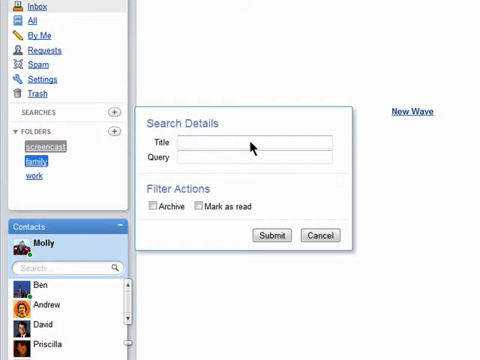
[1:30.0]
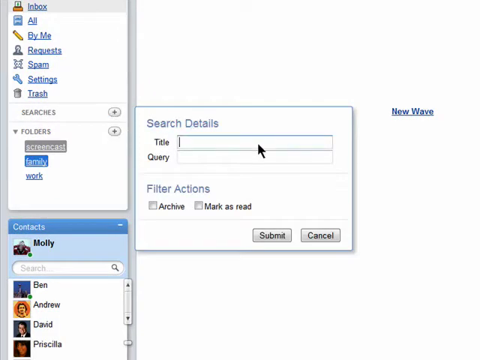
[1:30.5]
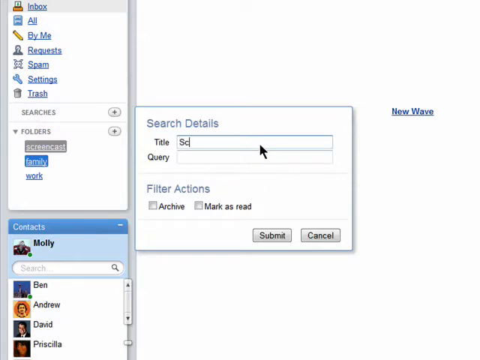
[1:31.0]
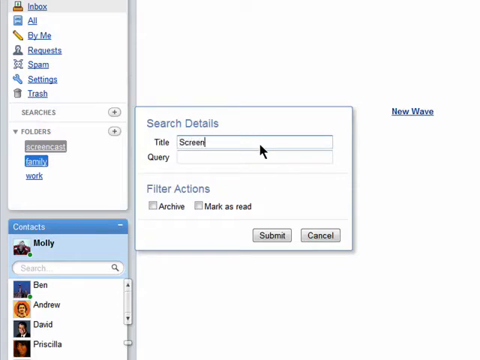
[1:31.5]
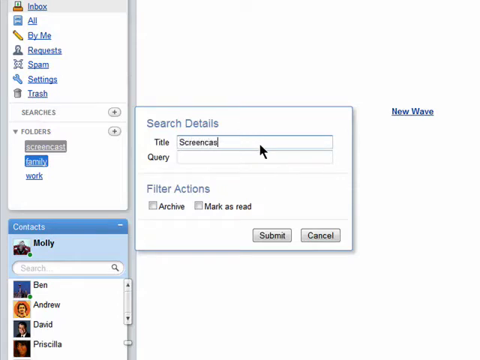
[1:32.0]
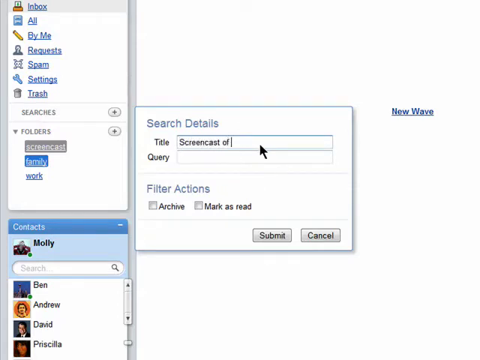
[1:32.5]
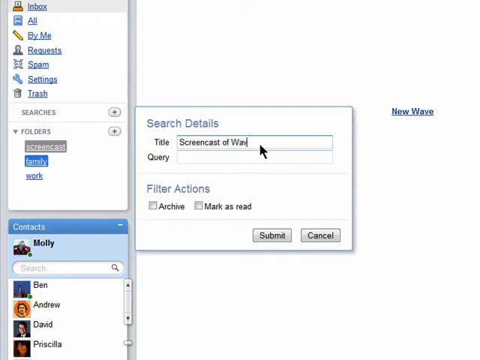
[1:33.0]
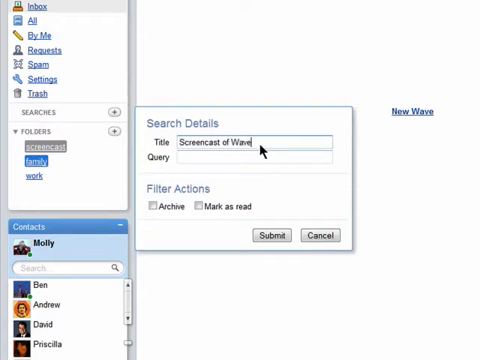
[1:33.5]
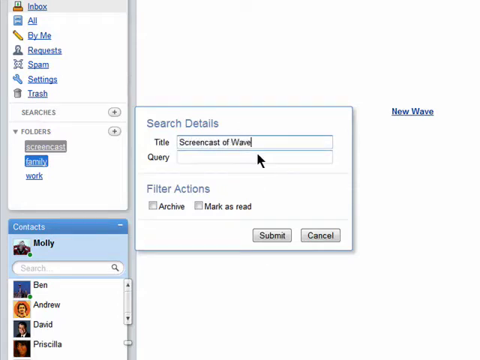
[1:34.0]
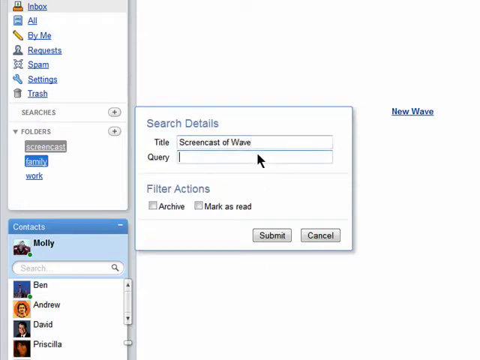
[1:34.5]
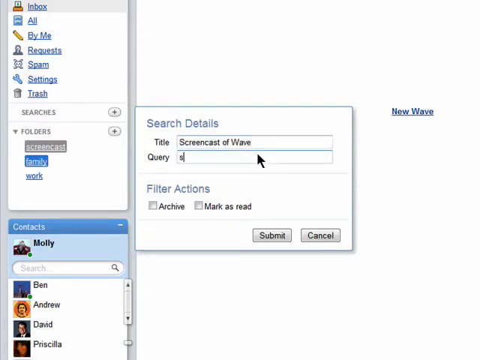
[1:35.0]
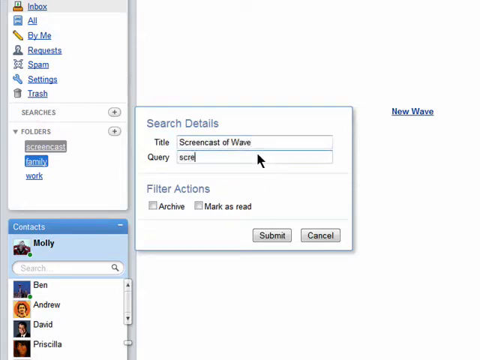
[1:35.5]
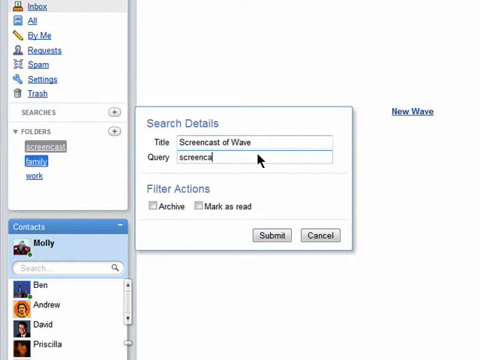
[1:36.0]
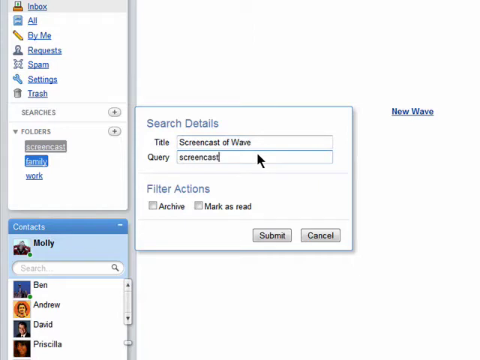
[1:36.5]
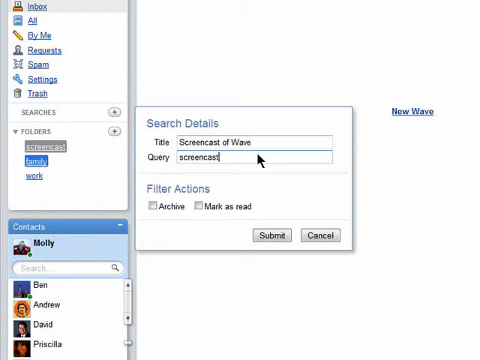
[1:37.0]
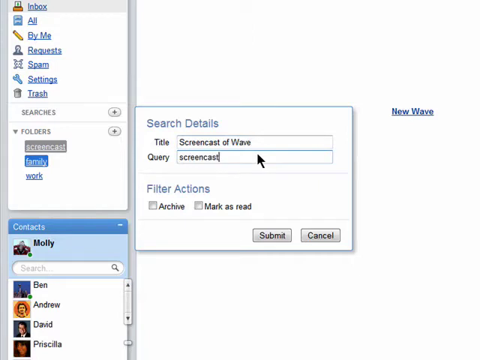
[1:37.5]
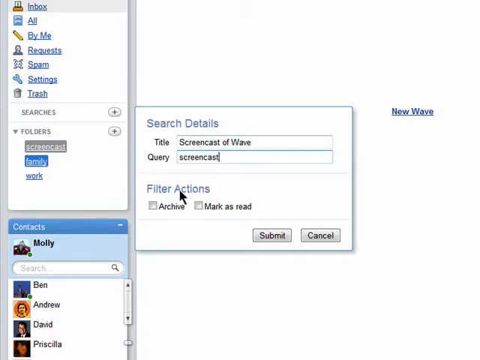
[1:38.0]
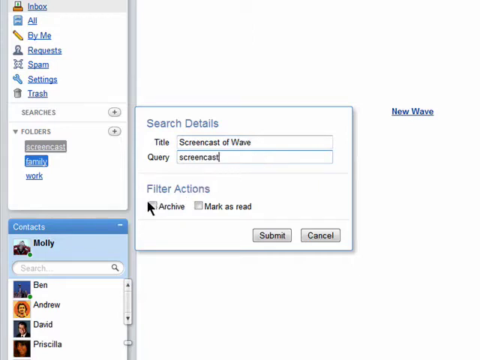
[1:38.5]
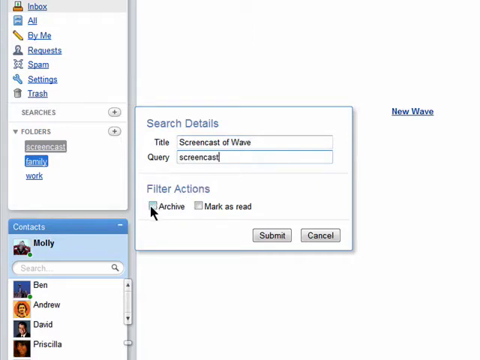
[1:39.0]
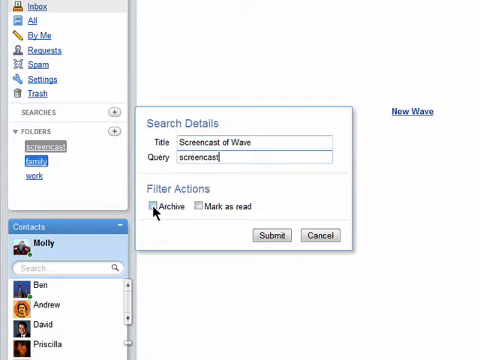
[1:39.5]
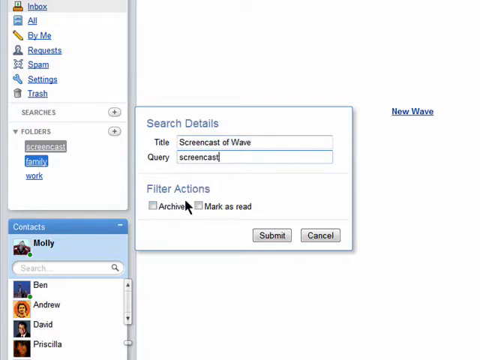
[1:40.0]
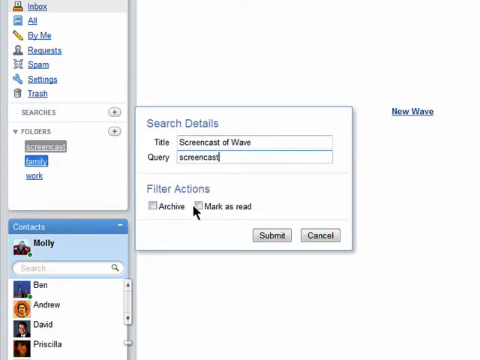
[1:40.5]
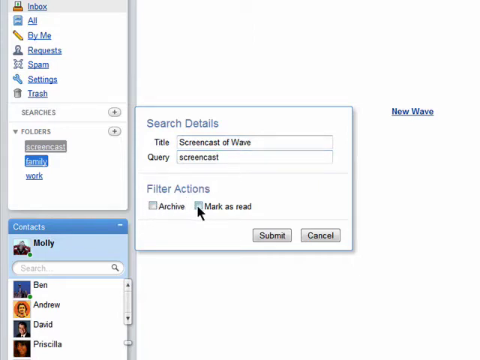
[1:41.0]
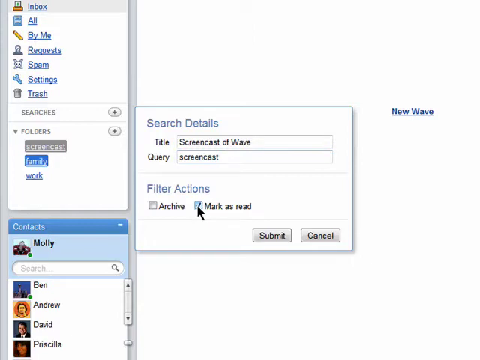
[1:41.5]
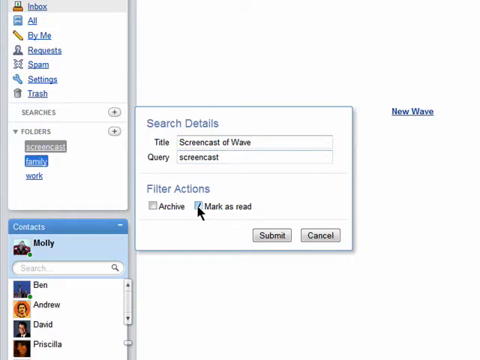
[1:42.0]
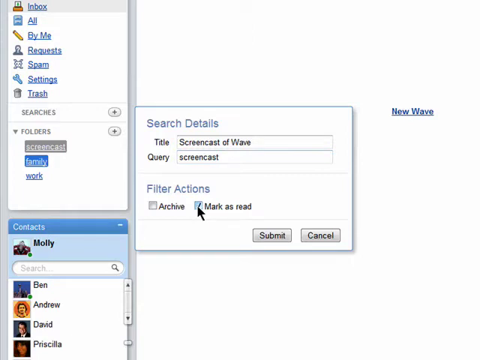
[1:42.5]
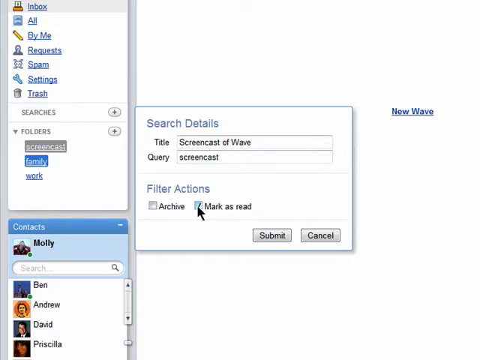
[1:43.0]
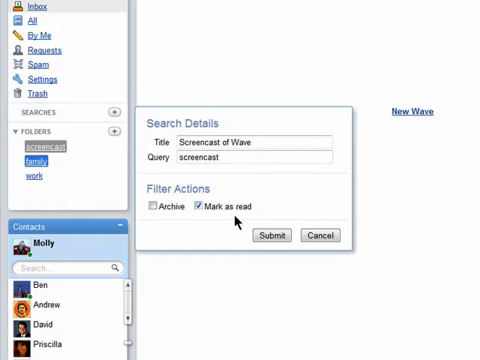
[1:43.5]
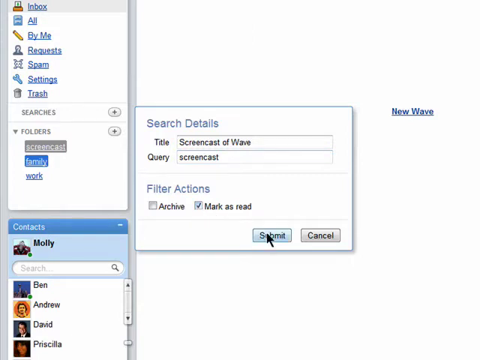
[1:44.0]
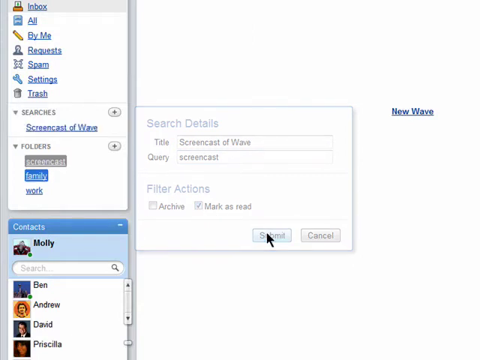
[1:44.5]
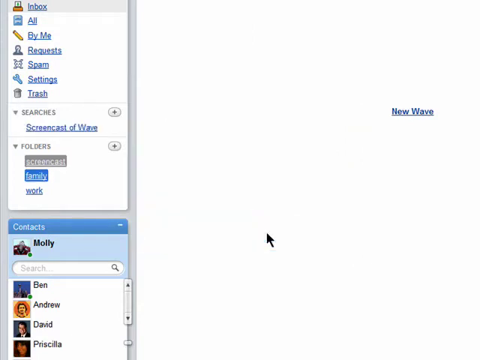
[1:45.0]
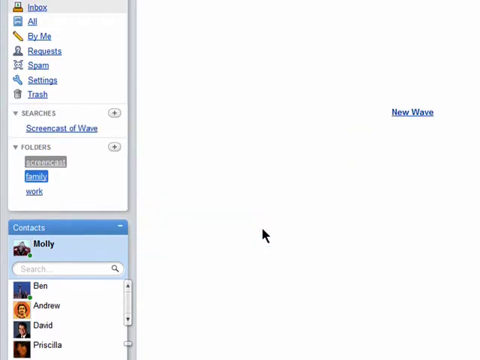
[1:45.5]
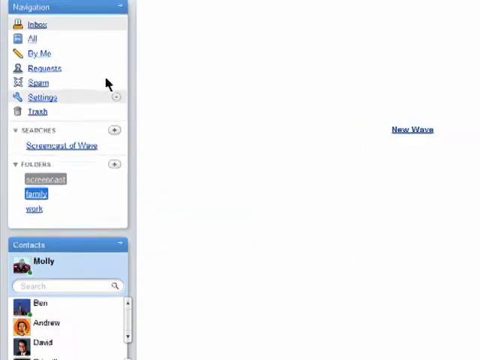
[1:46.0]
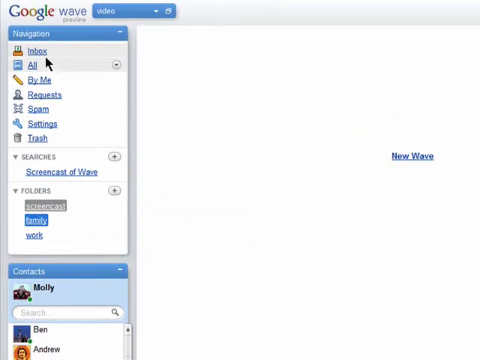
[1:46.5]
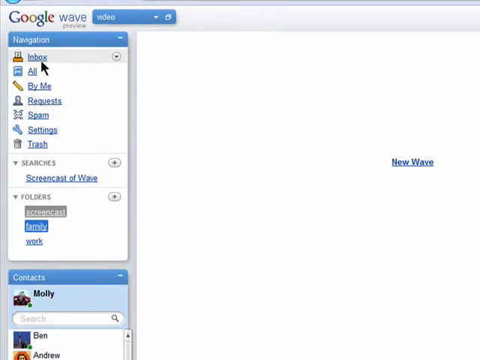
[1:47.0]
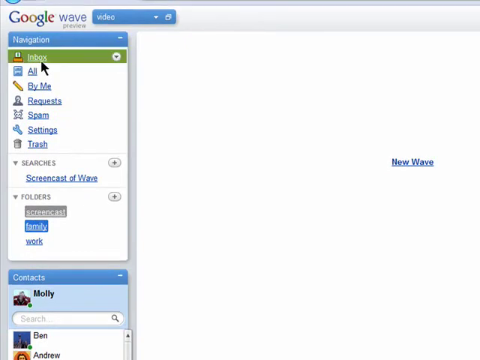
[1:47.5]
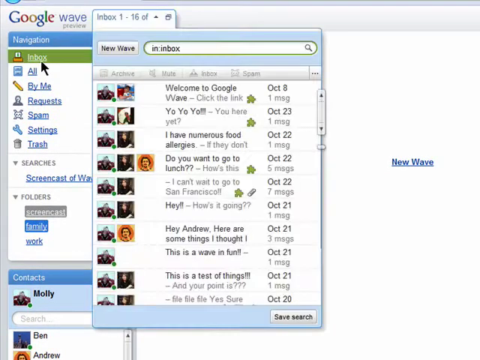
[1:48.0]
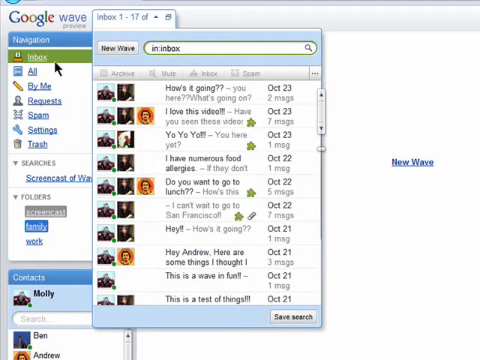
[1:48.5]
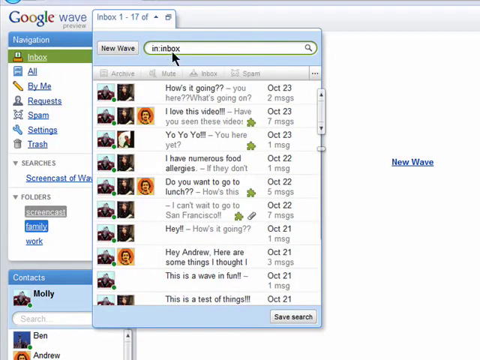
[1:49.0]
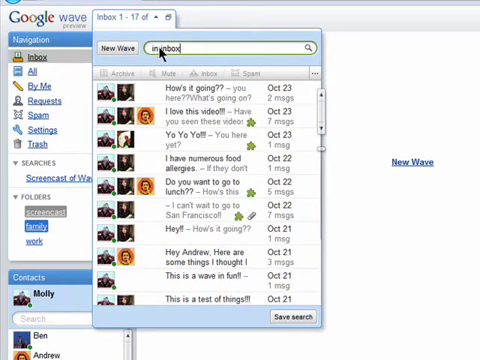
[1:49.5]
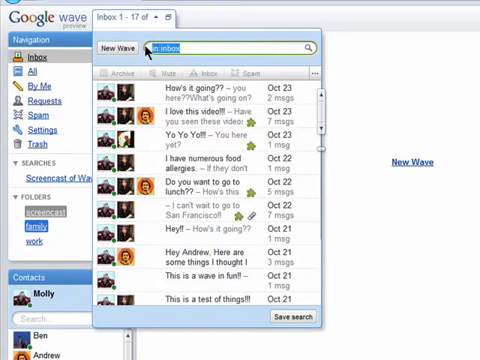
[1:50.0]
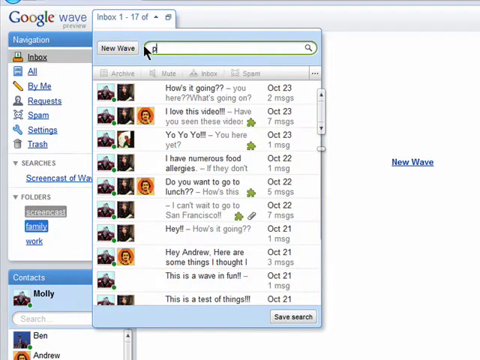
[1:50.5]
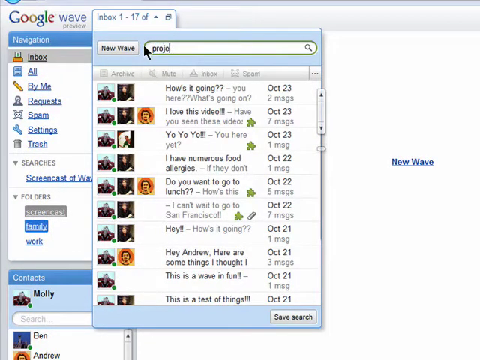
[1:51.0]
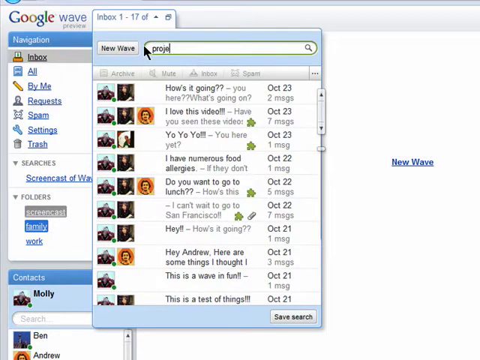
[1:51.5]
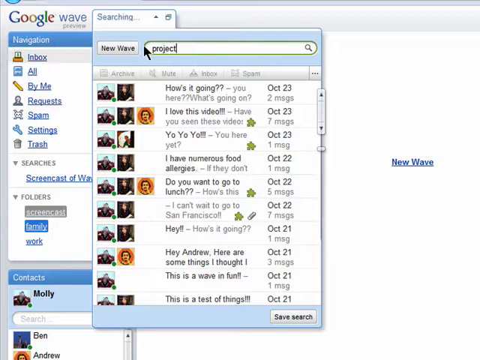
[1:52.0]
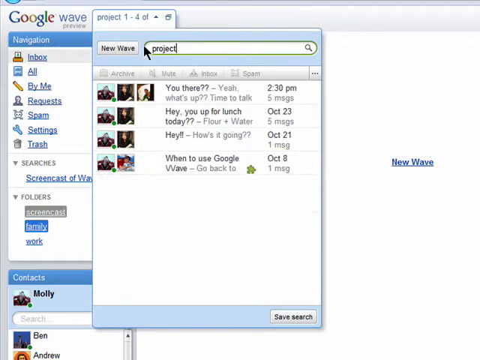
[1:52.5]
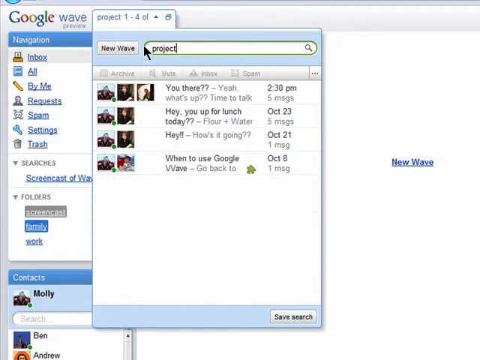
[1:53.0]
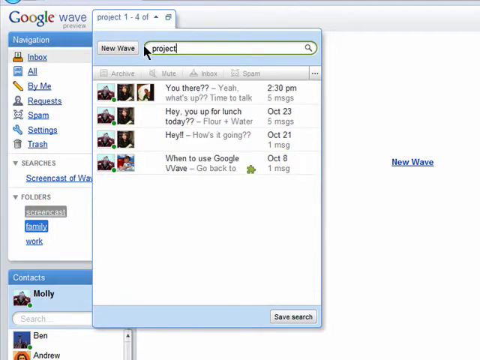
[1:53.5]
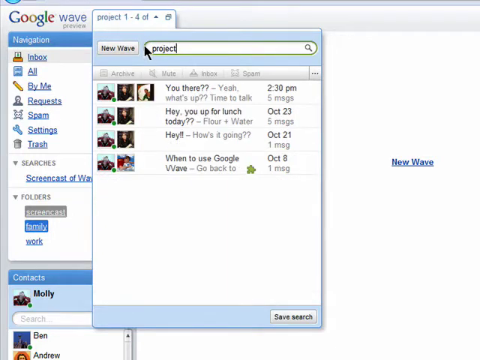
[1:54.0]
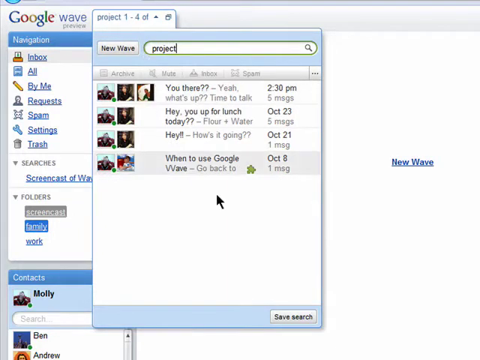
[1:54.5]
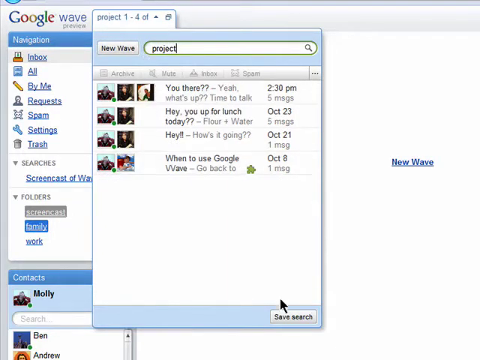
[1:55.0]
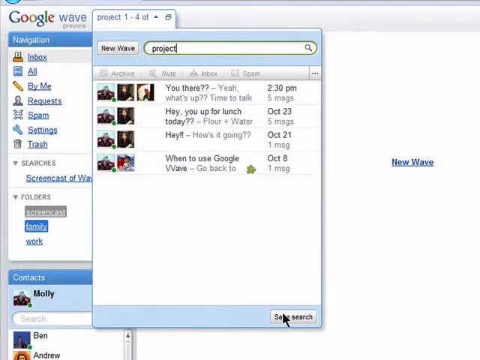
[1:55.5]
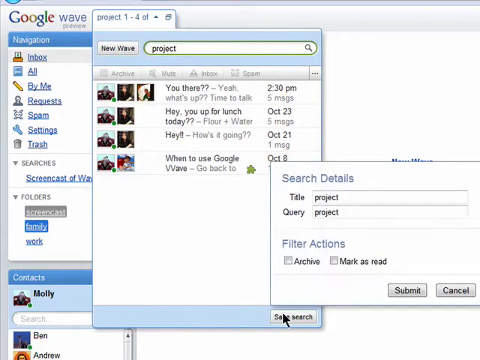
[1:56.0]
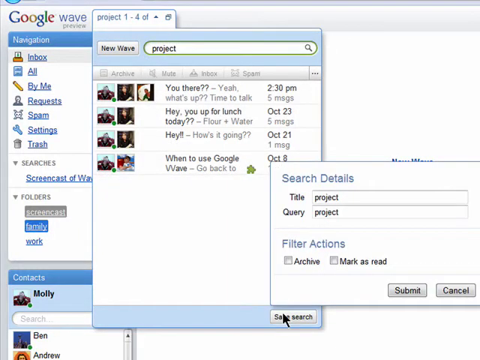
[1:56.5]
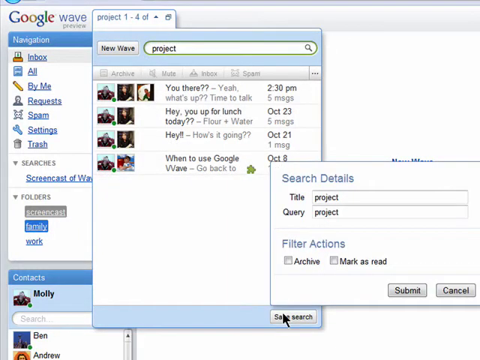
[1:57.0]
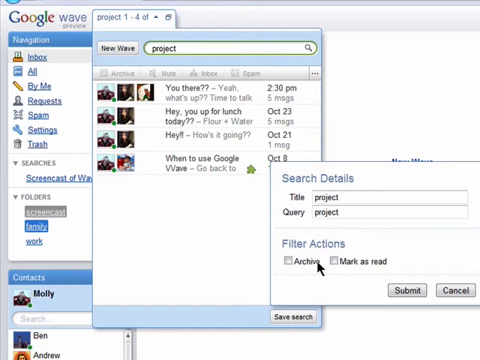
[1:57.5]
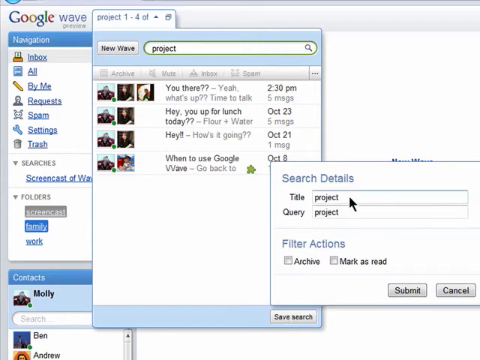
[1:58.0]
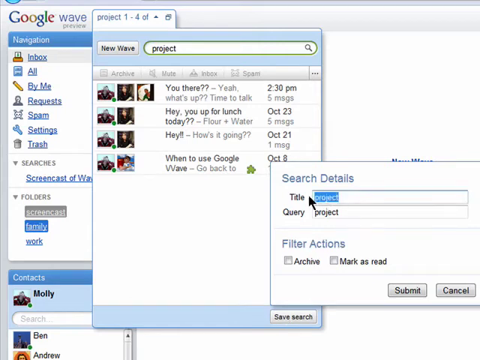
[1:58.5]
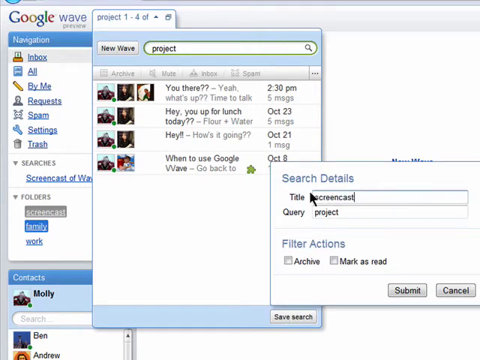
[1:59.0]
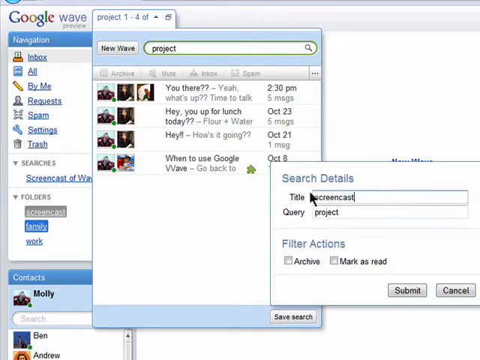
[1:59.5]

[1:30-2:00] In the search details pop-up, he types "screencast of WAVE" in the title field, then moves to the query text field and types just "screencast". Under filter actions there is an archive checkbox; he hovers over it but does not click it, and instead clicks mark as read, a black checkmark box. He then clicks submit, a blue button. He scrolls up a little; no videos appear on the right, which just says "new WAVE". He scrolls up to the inbox link under the navigation and clicks it, and the inbox turns to white lettering with green highlighting. This time it shows only 1 of 17 in the inbox. He moves to the text field, highlights the inbox text there, and types "project", after which only four items appear. He goes to save search at the bottom right of the pop-up and clicks it, and the search details pop-up appears with both the title and query fields reading "project". He highlights the title, copies and pastes "screencast" into it, and clicks mark as read at the bottom.